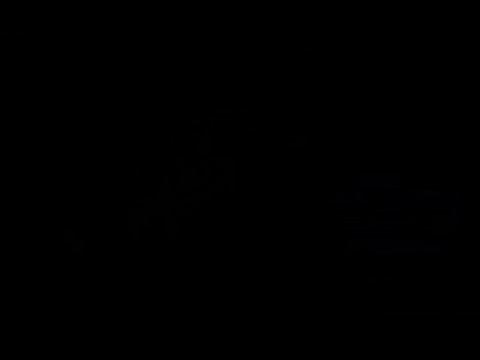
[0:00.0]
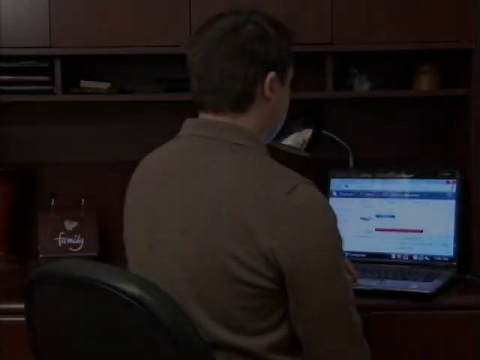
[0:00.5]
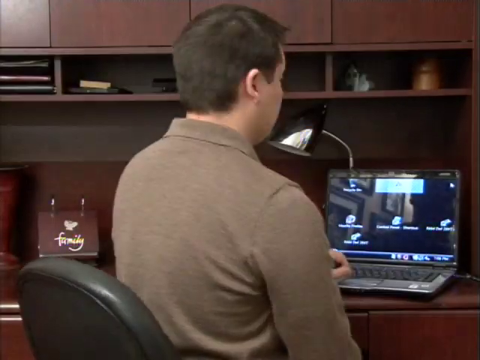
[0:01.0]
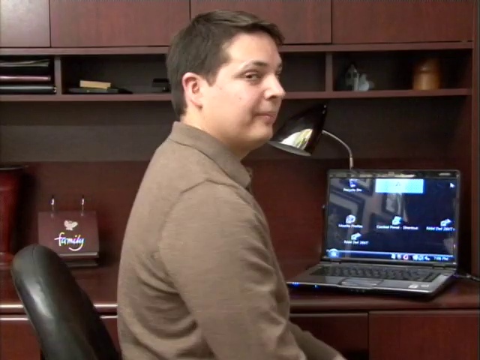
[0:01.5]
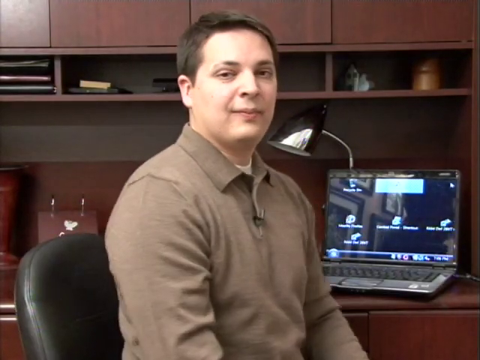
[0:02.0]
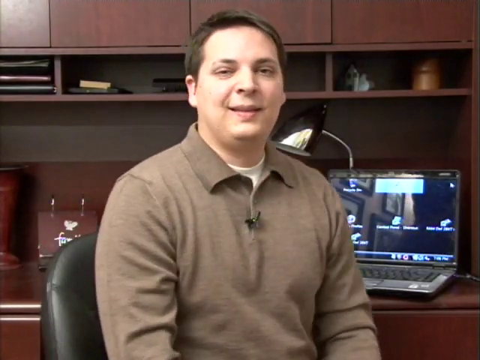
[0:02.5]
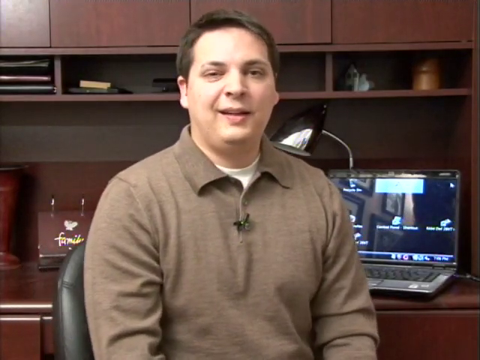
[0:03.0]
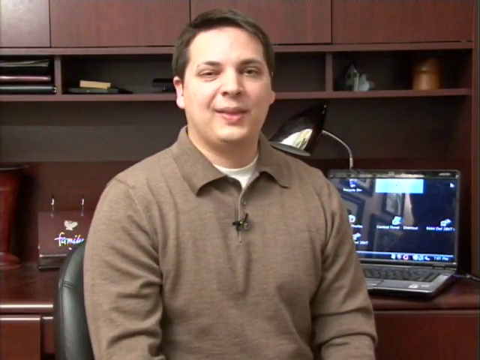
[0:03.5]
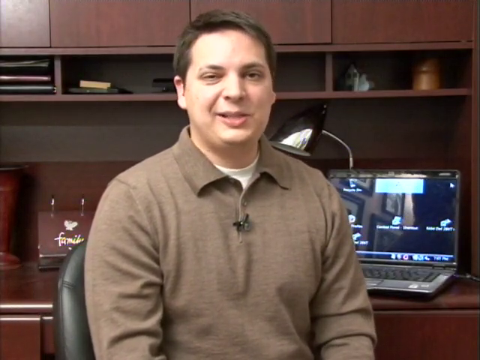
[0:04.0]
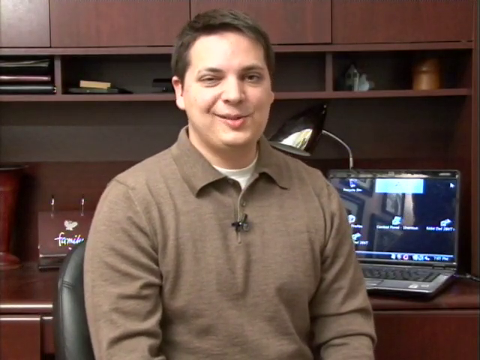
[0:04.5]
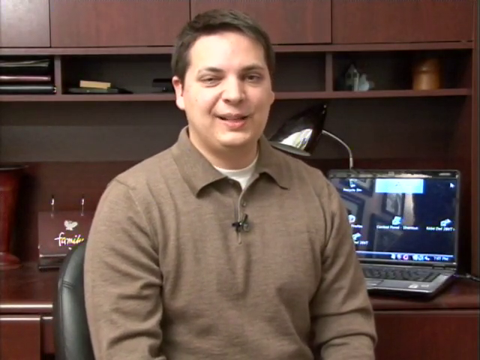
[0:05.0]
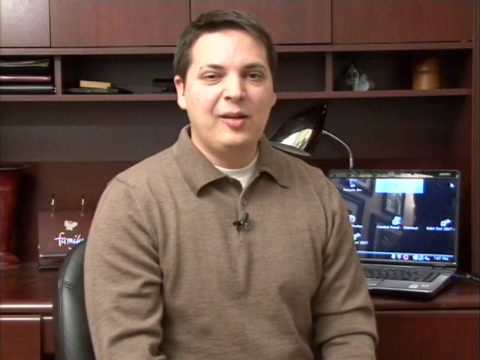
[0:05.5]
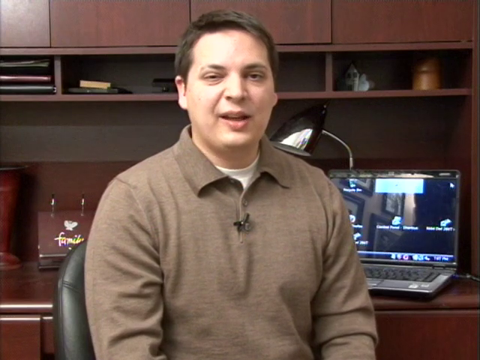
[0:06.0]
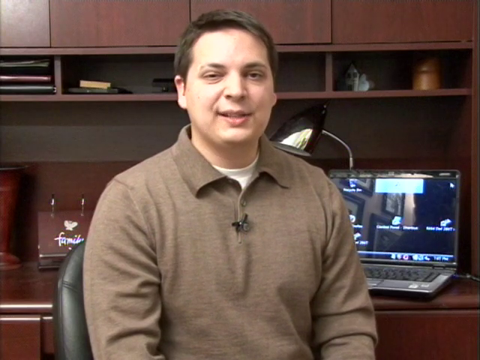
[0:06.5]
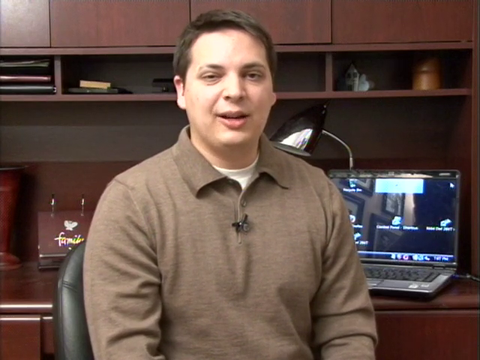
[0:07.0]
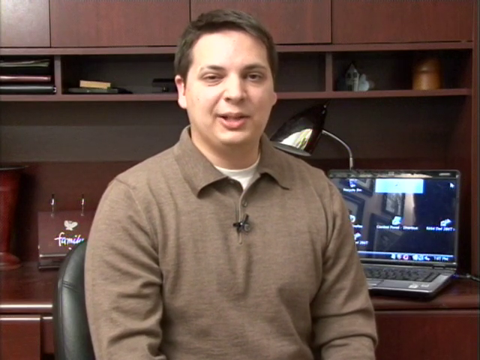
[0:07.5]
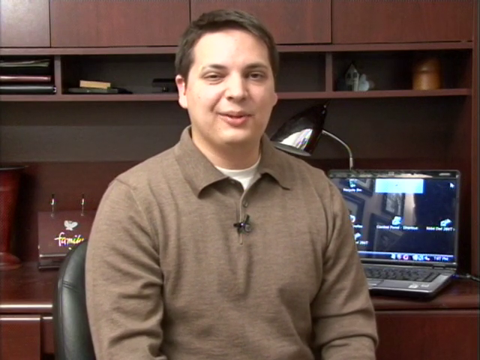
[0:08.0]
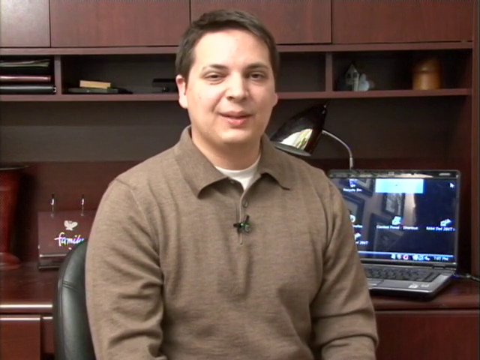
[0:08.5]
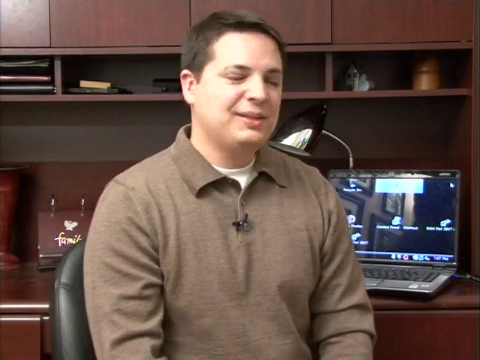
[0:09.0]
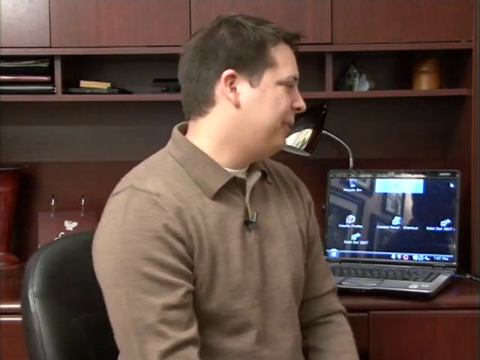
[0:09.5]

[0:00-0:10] An old man is in a working space, something like an office. Looking at the camera, he turns his chair to face it and introduces what he is going to do. He wears a white inner t-shirt under a long-sleeve brown golf t-shirt. There is a brown cupboard with books and laptops on it, and the laptop is on. He then turns the chair back to face the laptop.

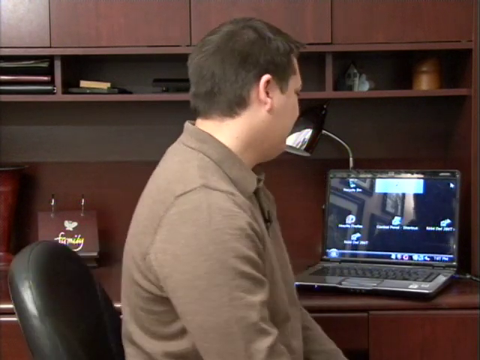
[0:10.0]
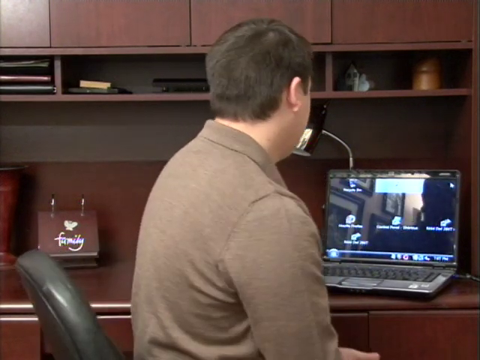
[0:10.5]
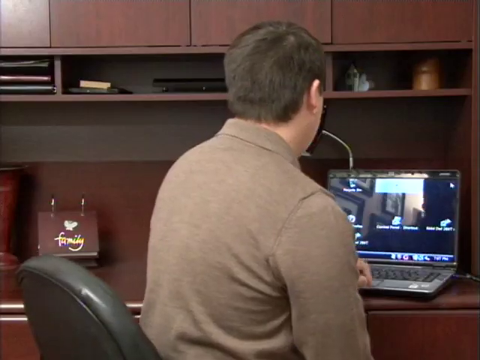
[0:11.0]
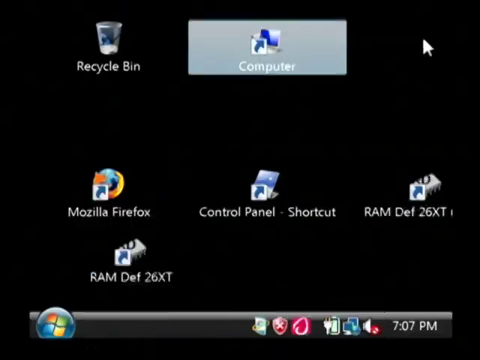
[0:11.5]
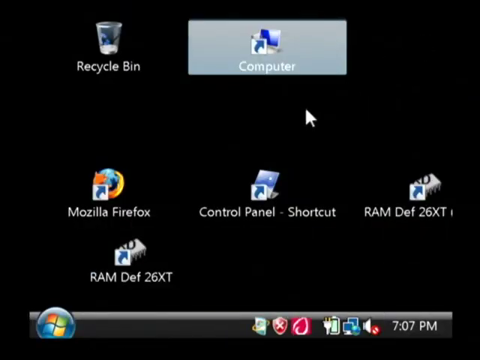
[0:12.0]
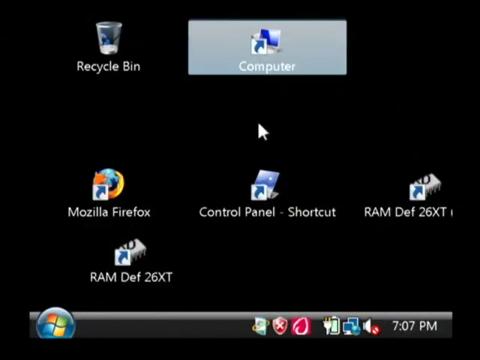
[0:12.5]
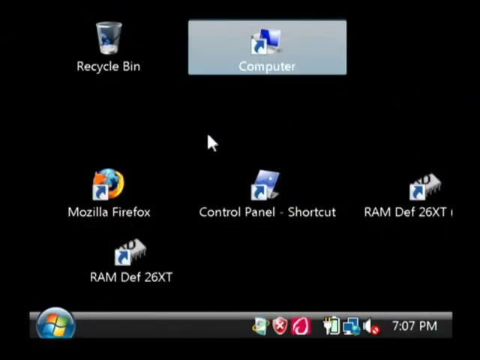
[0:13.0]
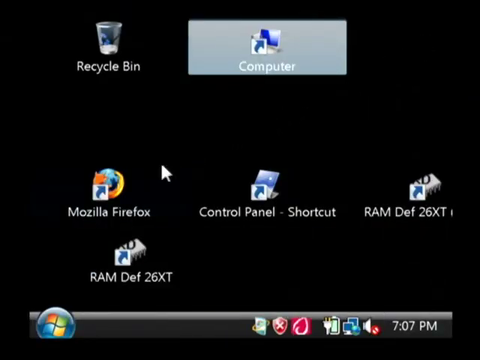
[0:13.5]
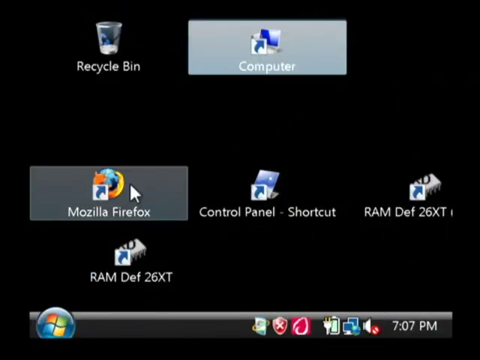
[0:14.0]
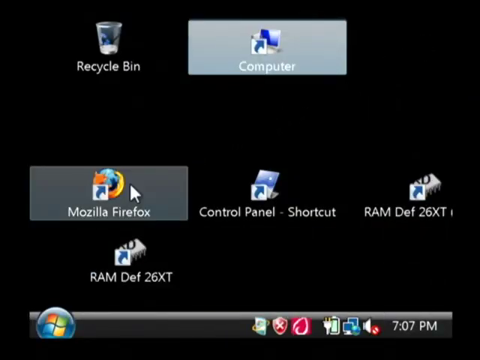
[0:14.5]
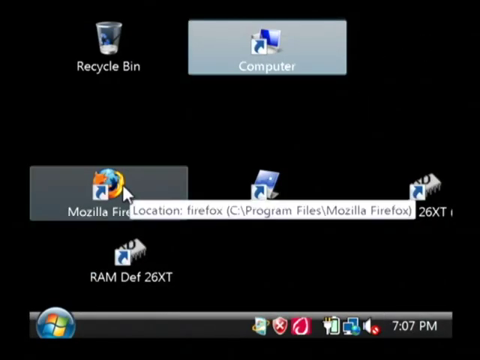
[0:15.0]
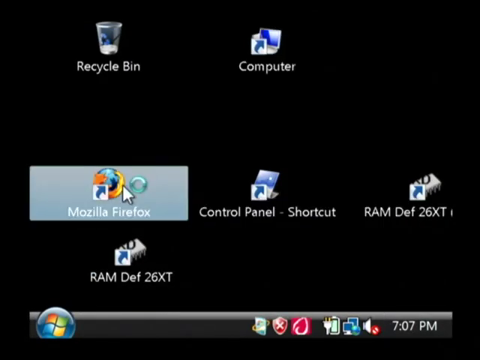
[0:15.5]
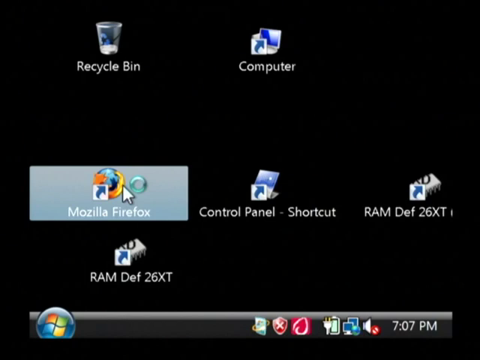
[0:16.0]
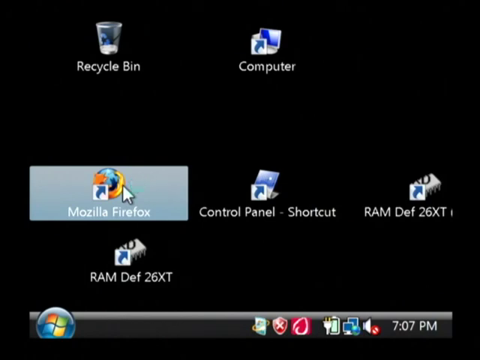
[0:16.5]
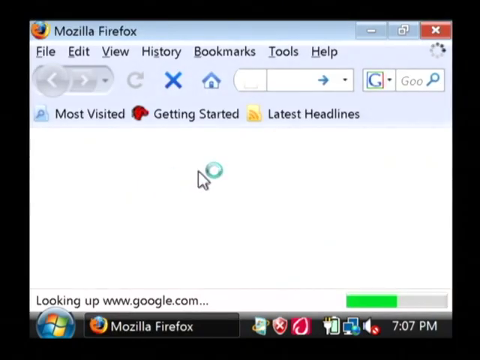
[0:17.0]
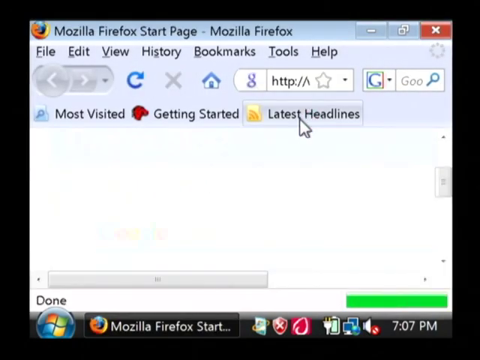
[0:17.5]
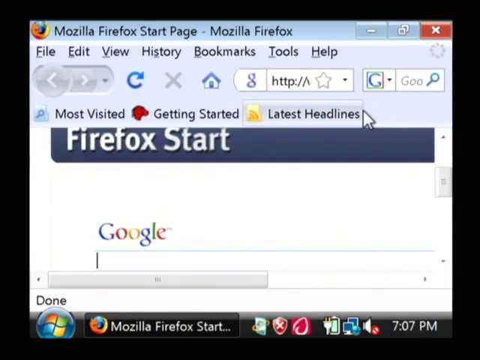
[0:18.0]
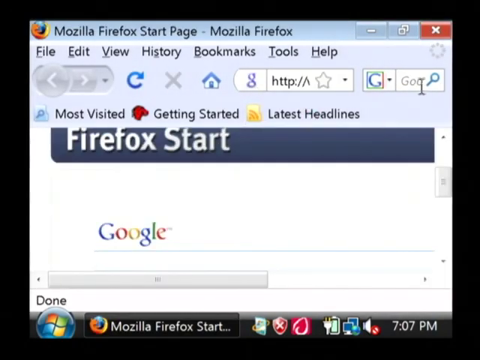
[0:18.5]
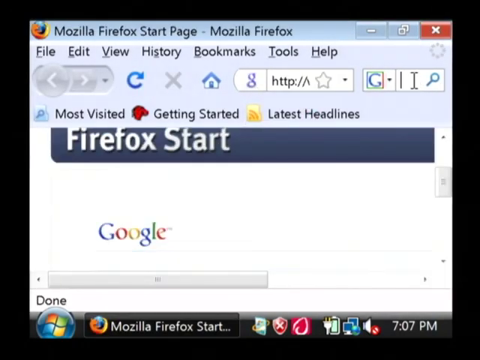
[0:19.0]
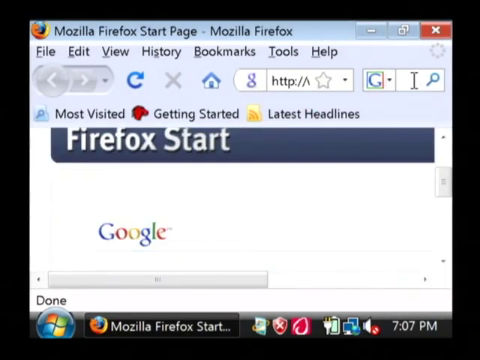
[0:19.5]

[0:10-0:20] An older, middle-aged man with brown hair wears a brown long-sleeve golf t-shirt. He turns his chair to face a laptop, opens the Mozilla Firefox app and begins a search. He is in a working space with a brown cupboard that holds his laptop and books, and he is sitting on a black chair. The man looks about 35 years old and has short brown hair. He is busy on the laptop, searching in the Mozilla app.